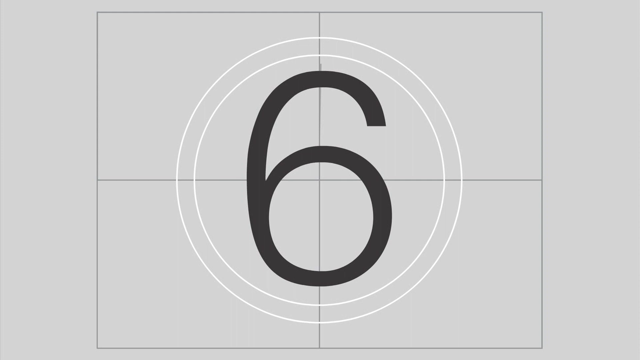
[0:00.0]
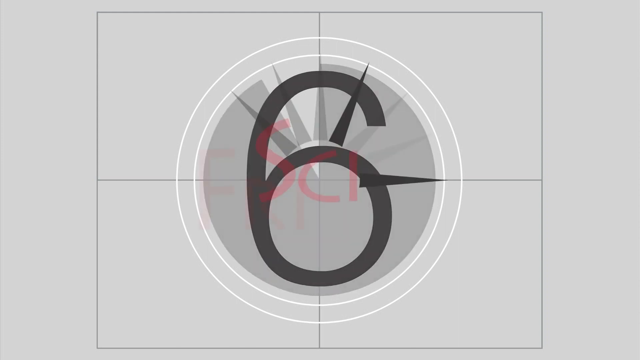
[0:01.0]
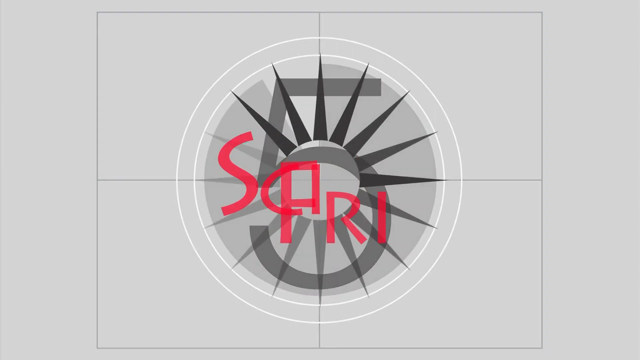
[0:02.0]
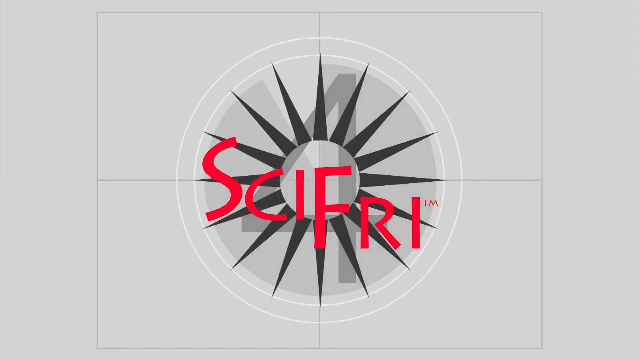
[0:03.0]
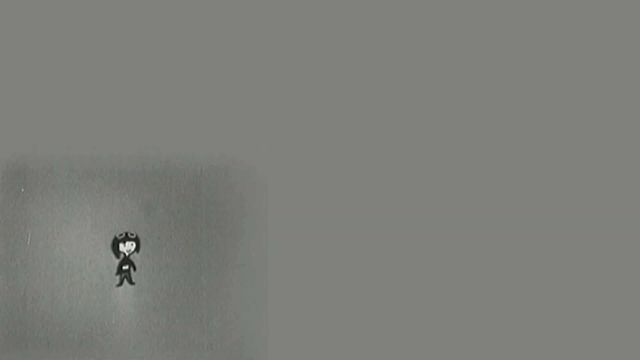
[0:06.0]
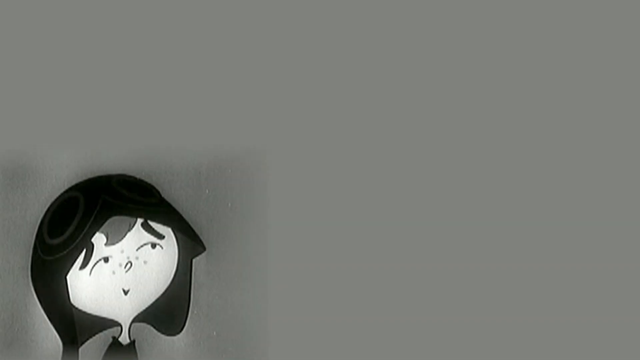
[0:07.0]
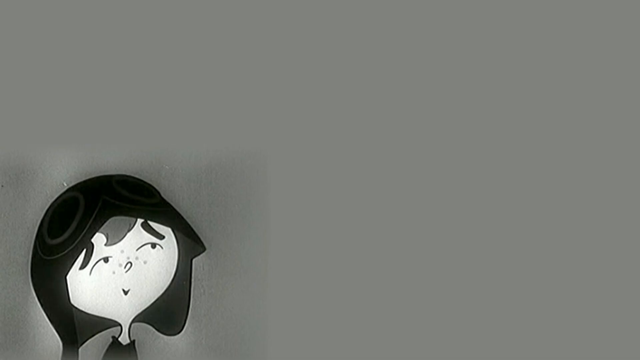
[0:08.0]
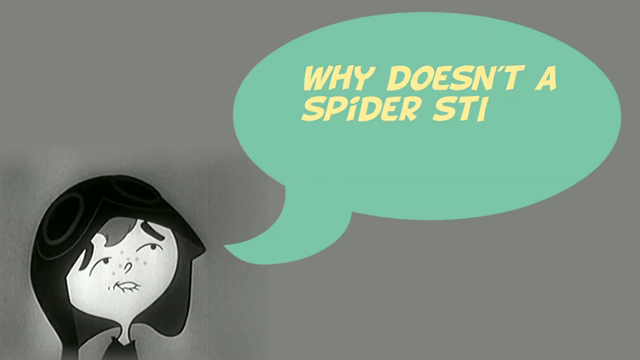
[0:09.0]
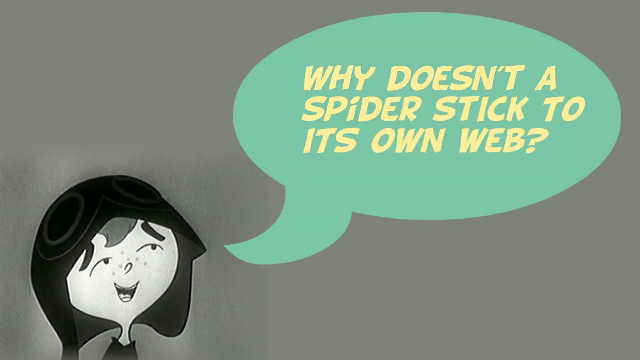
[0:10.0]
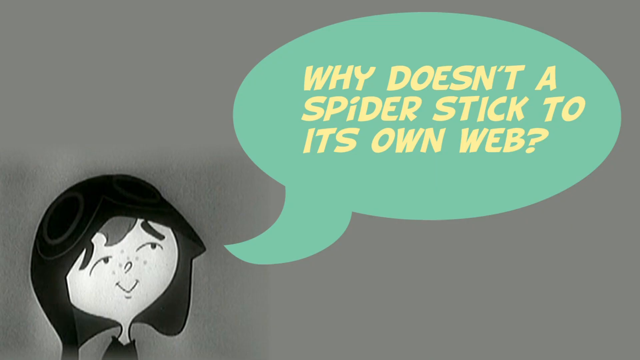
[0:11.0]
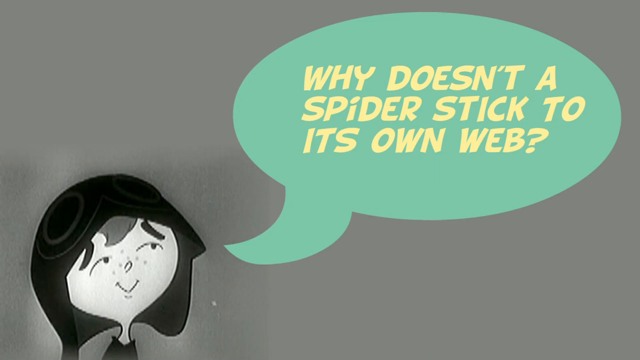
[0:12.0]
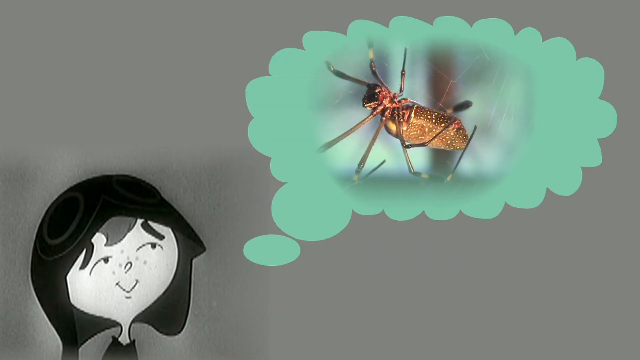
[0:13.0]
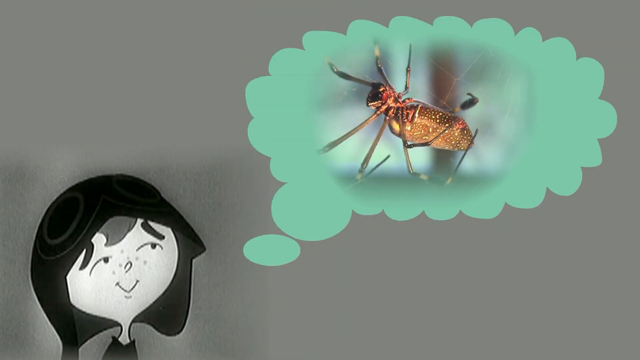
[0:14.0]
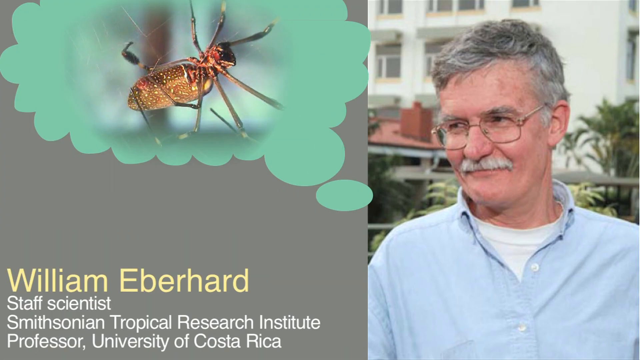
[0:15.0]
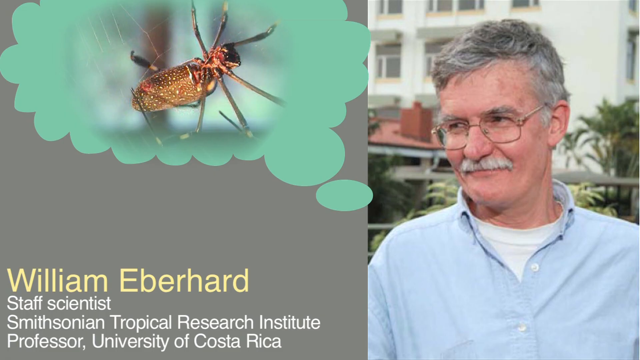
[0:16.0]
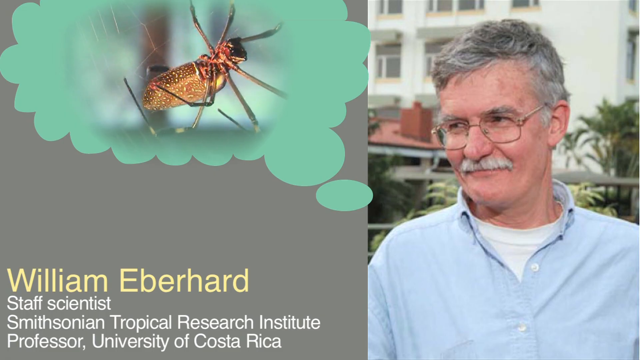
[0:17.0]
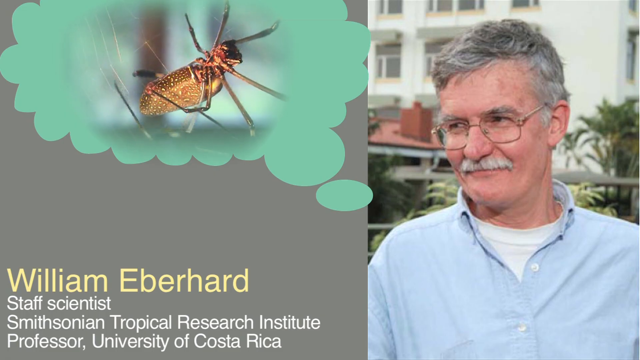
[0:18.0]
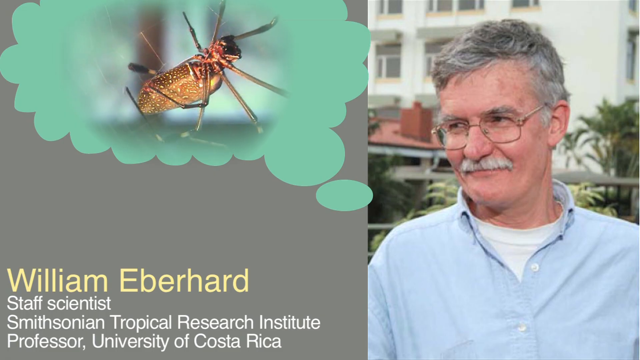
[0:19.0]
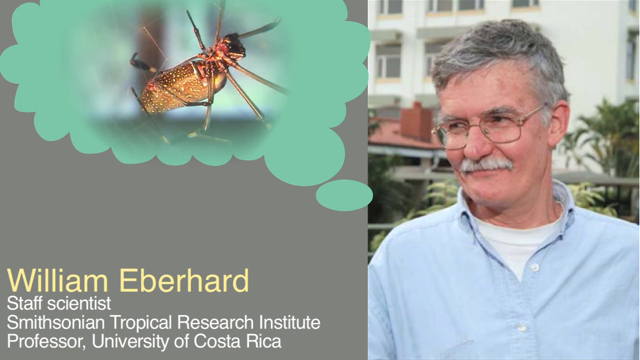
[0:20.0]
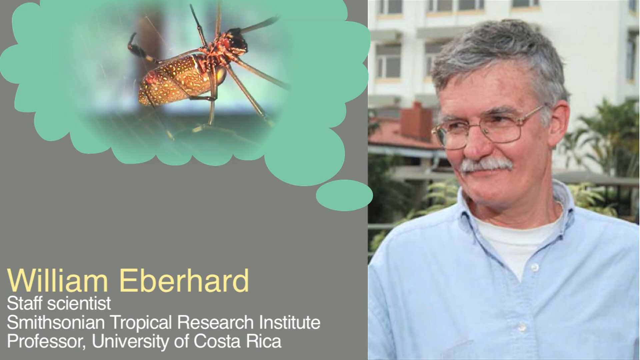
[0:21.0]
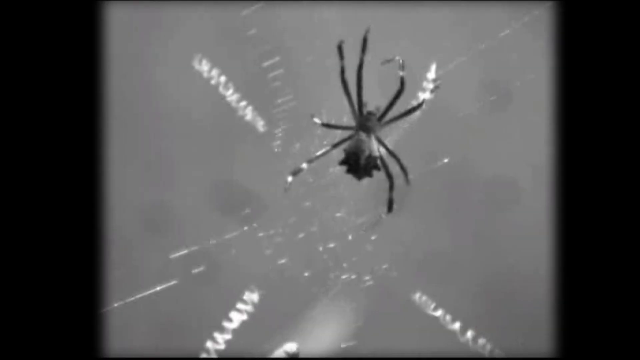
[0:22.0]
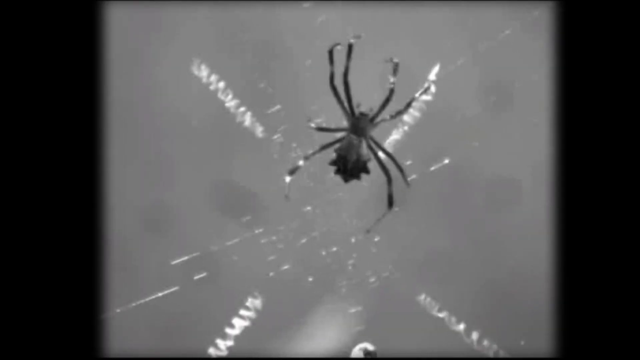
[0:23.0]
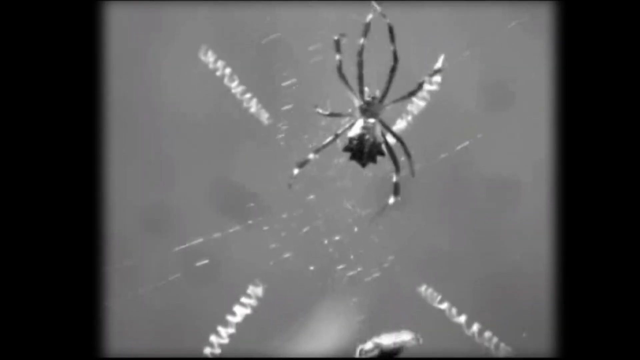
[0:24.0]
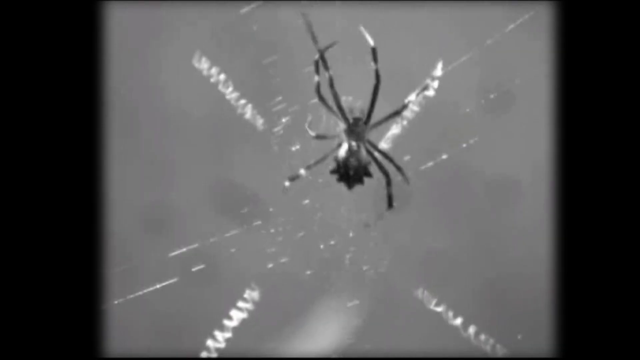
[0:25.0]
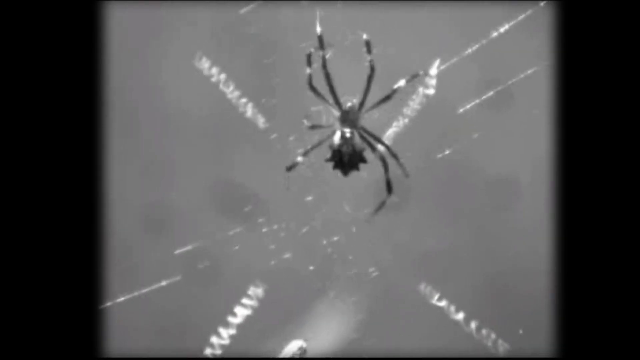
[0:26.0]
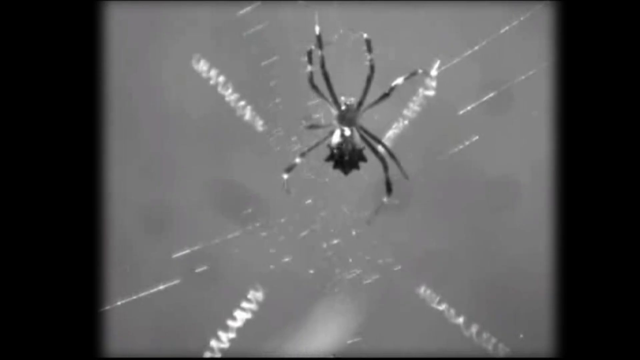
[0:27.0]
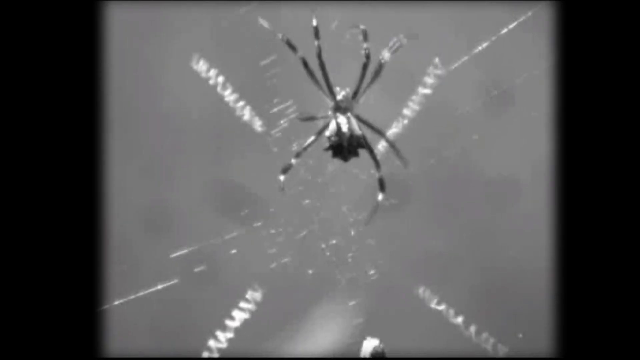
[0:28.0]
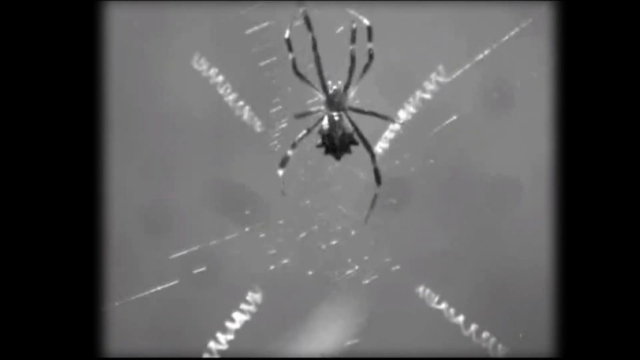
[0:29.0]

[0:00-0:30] The video opens with a countdown: numbers count down inside a gray circle that lights up. A black six appears, and in four boxes the six is shown while a white circle sweeps around that section, almost like a clock spinning, and the text "sci-fi" appears. The count shows six, five, four and three, but the two and the one are not visible because the page goes blank. A cartoon character in the lower left-hand corner then says, "why doesn't a spider stick to its own web?", followed by a picture of a spider on a web. William Eberhard, staff scientist at the Smithsonian Tropical Research Institute and professor at the University of Costa Rica, is shown along with a black-and-white video of a spider that is not sticking to its own web.